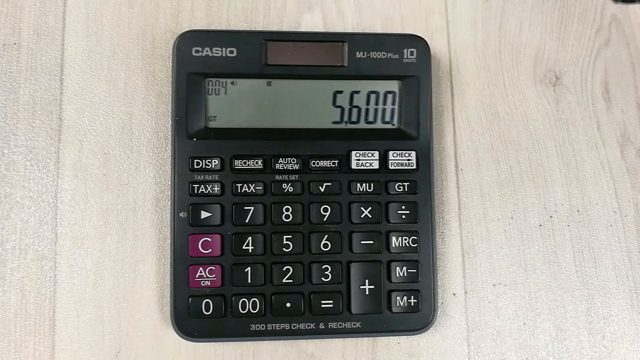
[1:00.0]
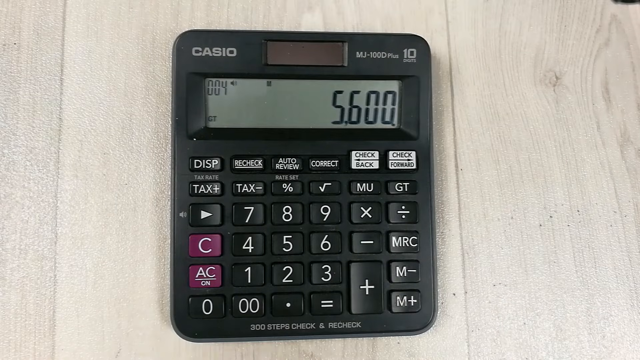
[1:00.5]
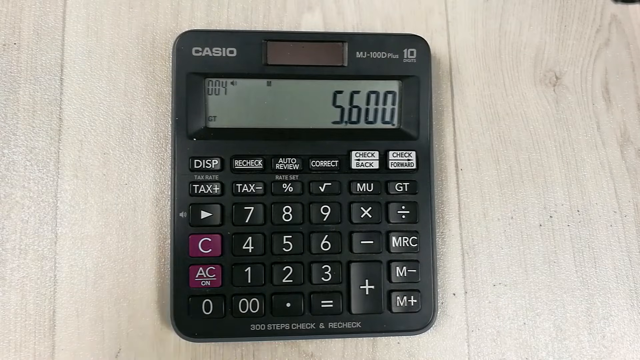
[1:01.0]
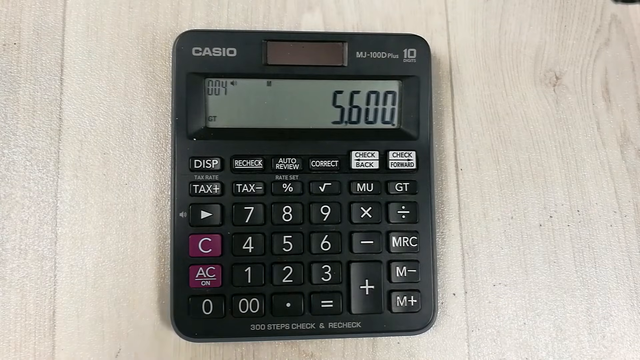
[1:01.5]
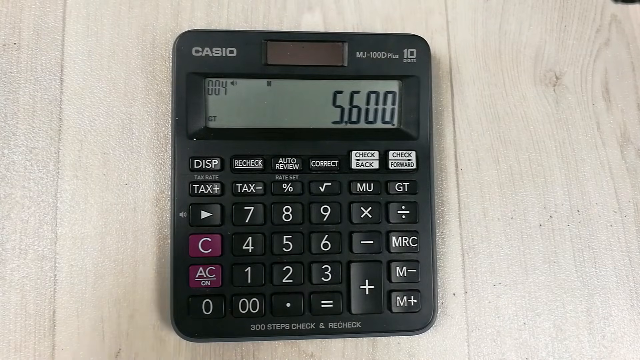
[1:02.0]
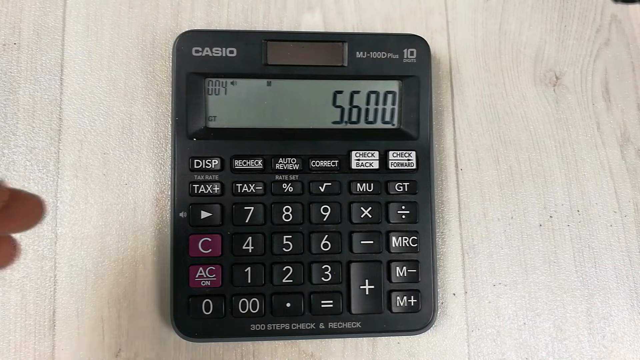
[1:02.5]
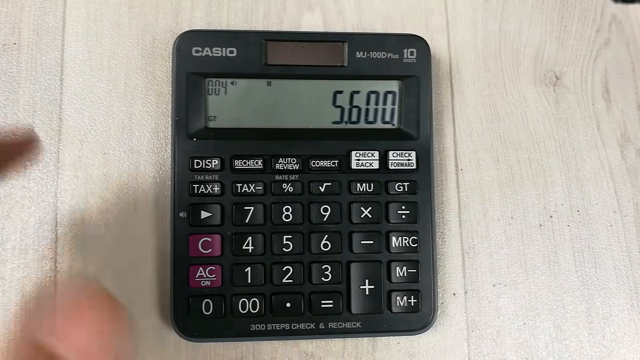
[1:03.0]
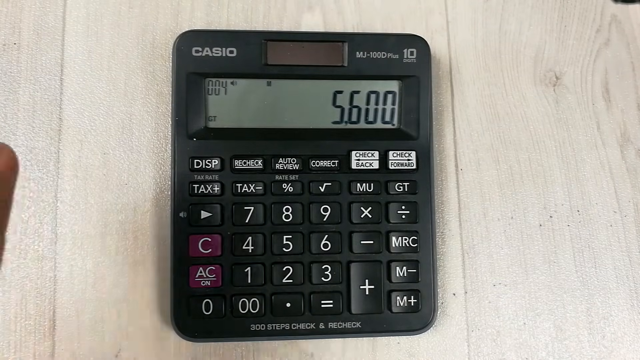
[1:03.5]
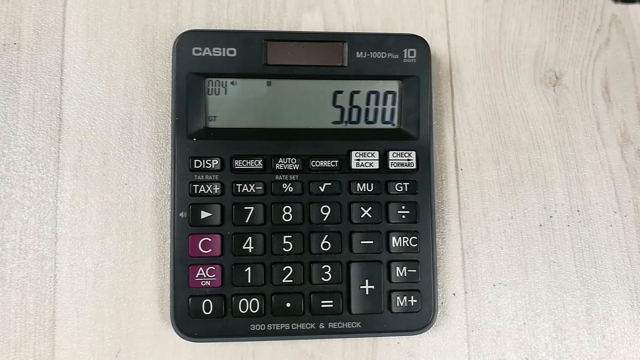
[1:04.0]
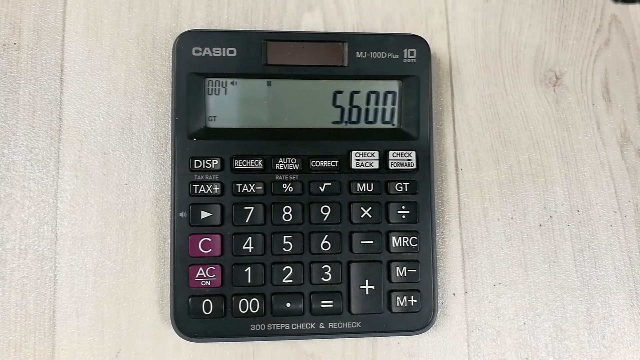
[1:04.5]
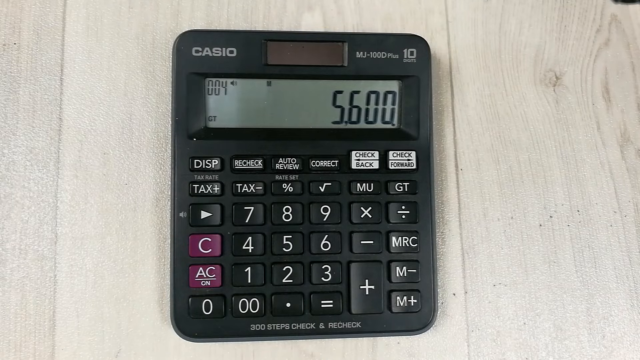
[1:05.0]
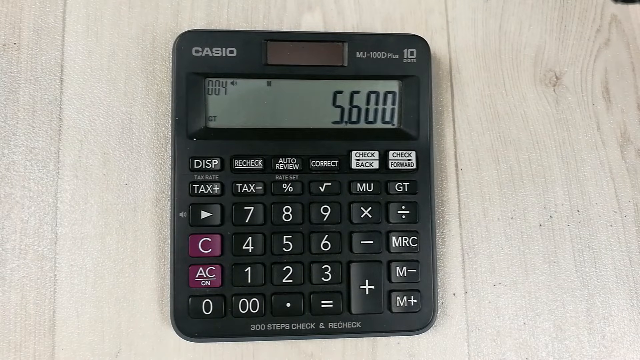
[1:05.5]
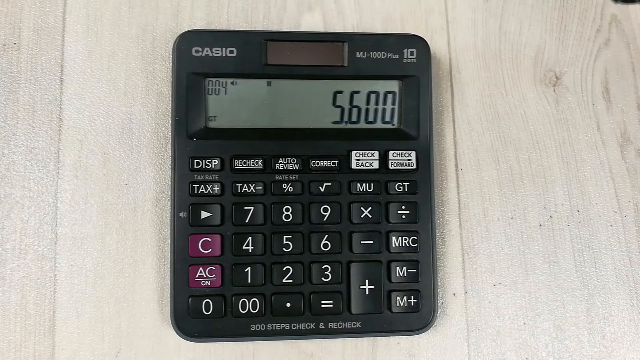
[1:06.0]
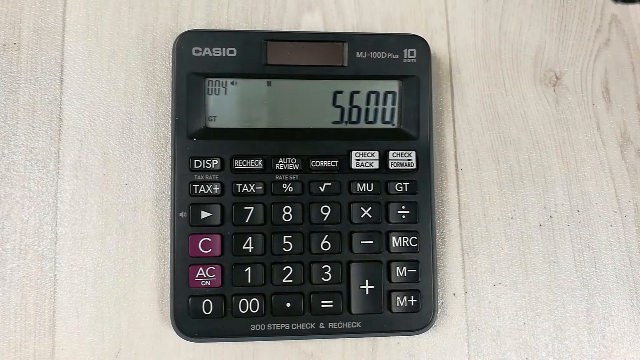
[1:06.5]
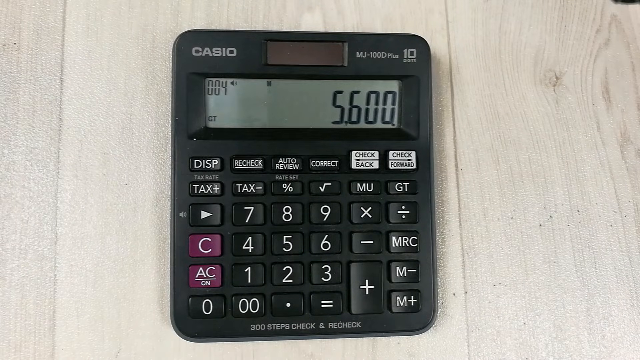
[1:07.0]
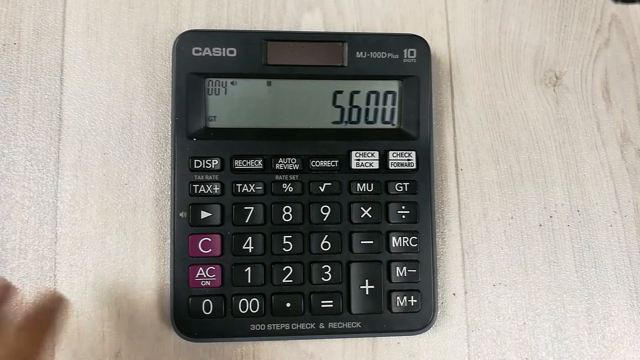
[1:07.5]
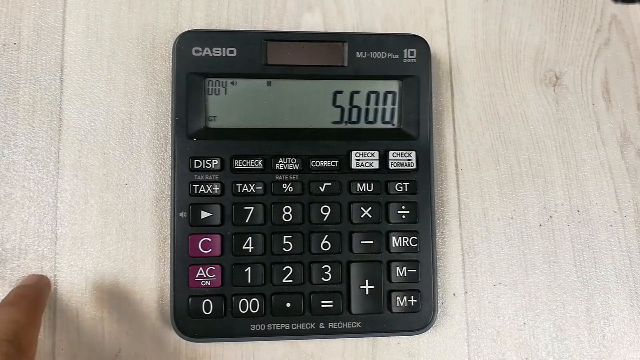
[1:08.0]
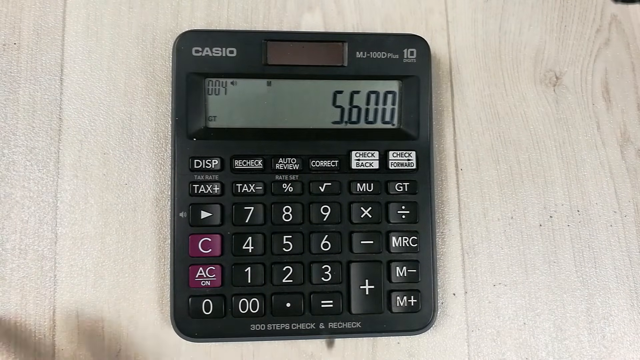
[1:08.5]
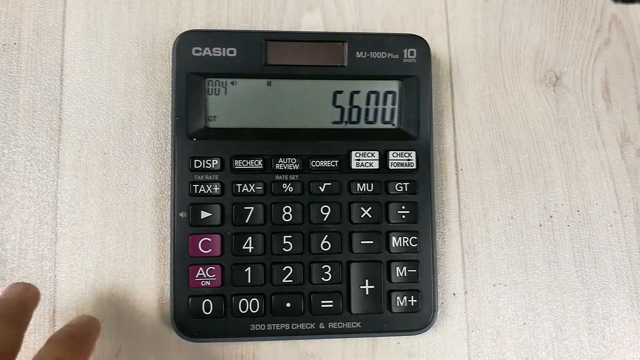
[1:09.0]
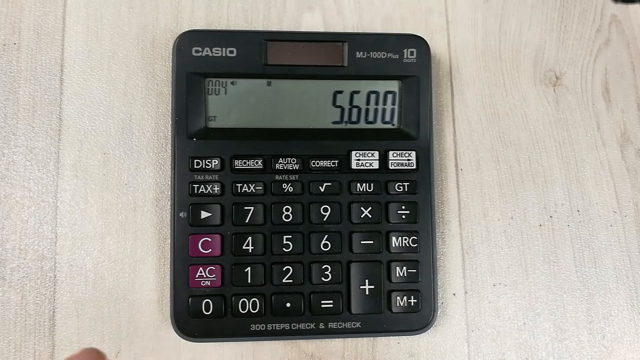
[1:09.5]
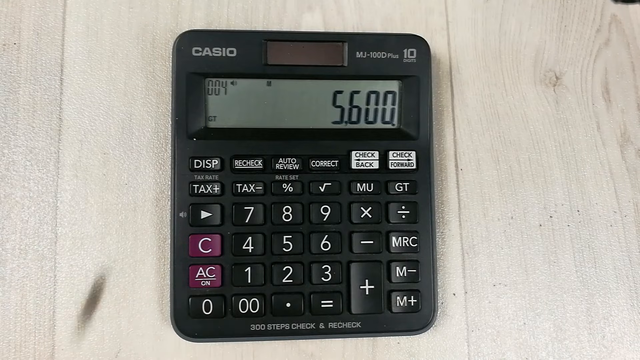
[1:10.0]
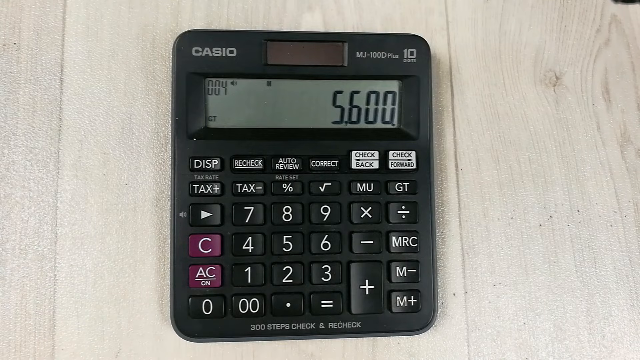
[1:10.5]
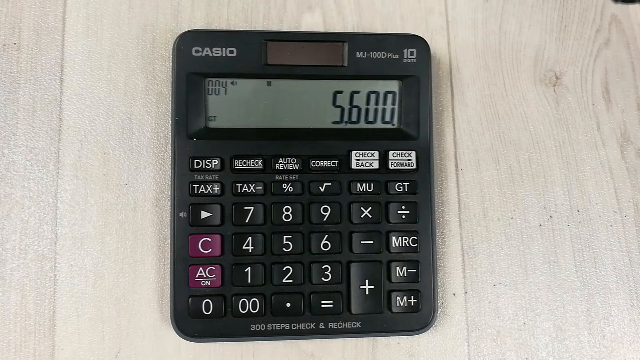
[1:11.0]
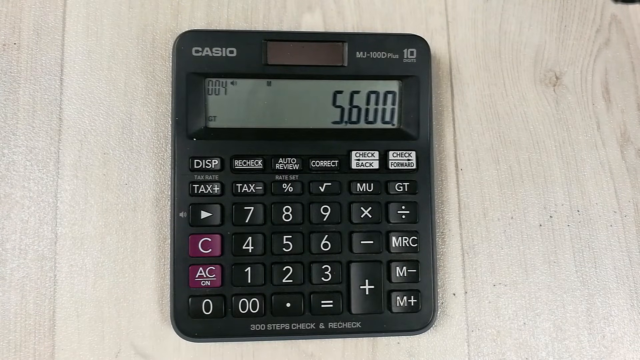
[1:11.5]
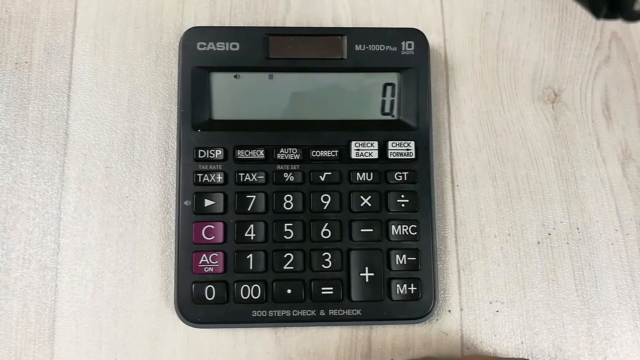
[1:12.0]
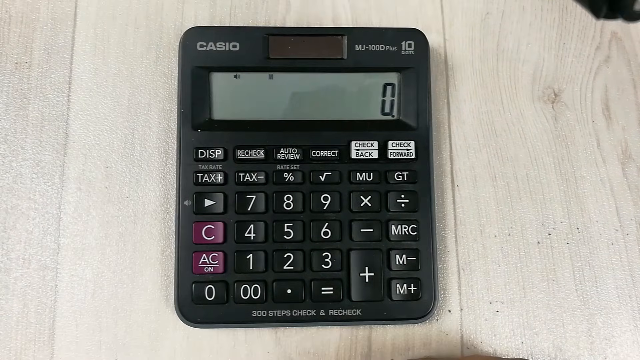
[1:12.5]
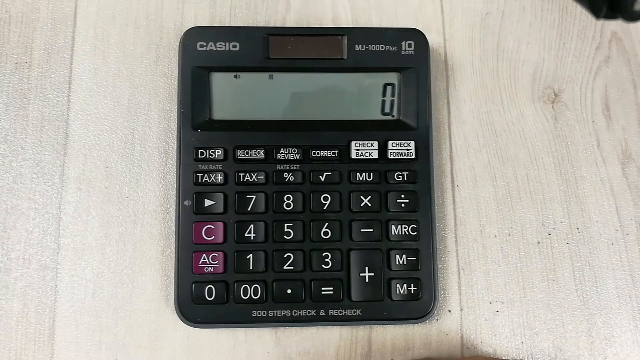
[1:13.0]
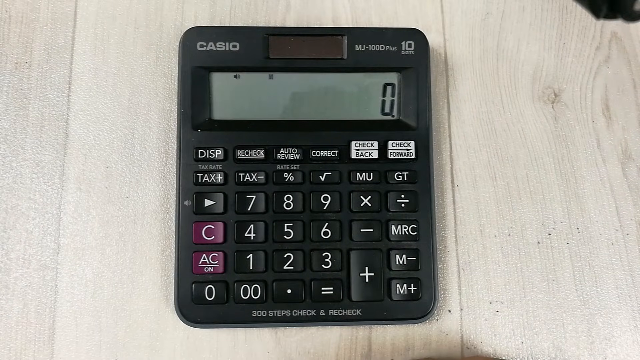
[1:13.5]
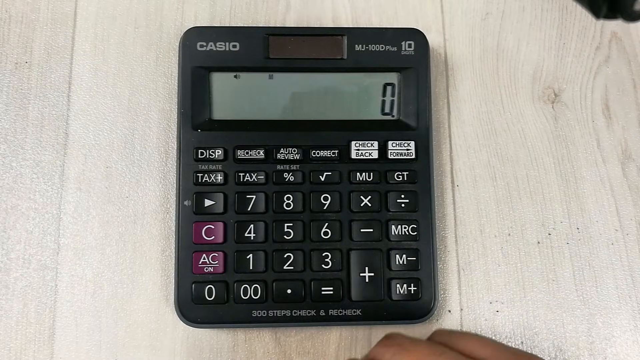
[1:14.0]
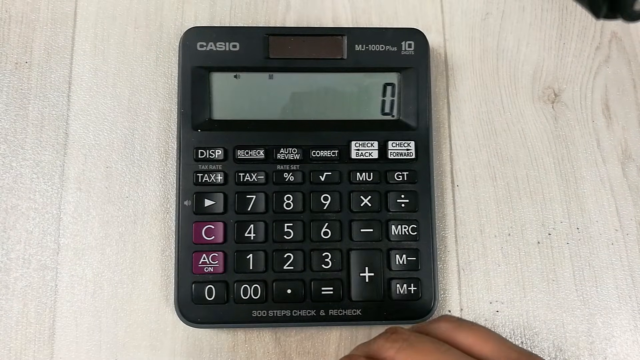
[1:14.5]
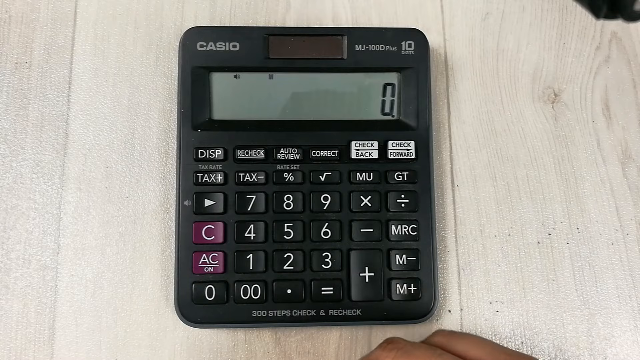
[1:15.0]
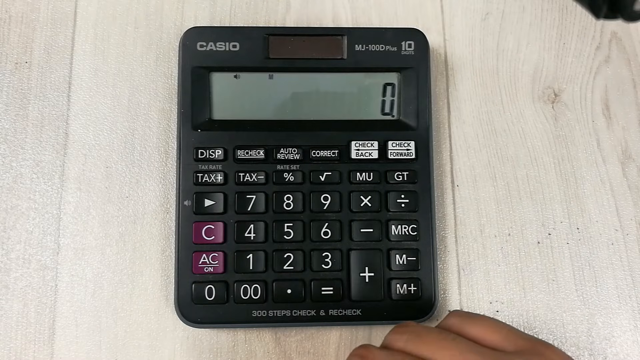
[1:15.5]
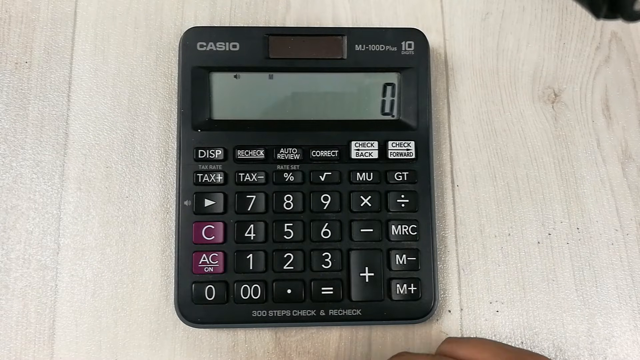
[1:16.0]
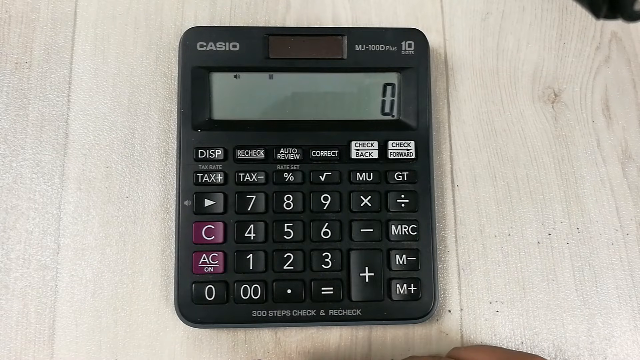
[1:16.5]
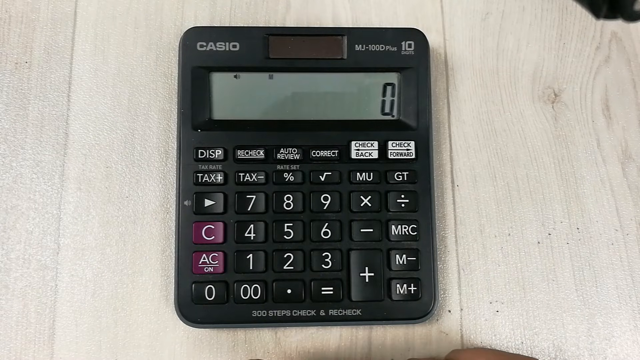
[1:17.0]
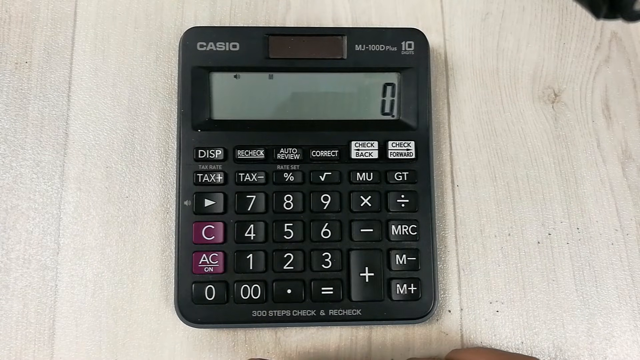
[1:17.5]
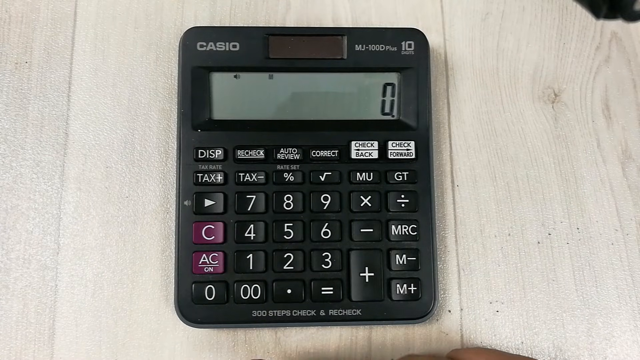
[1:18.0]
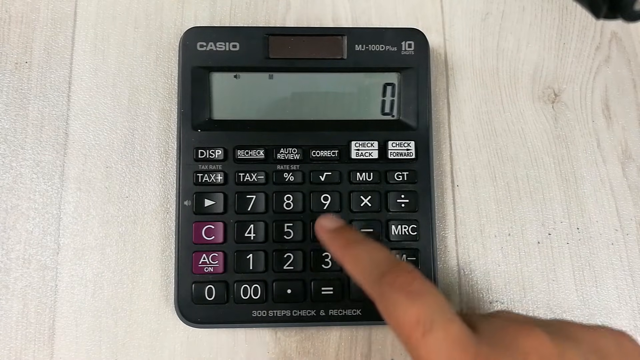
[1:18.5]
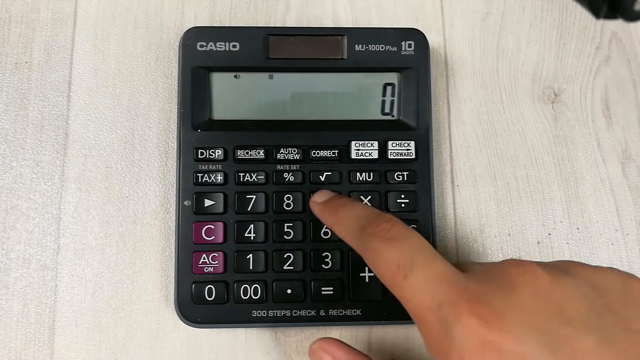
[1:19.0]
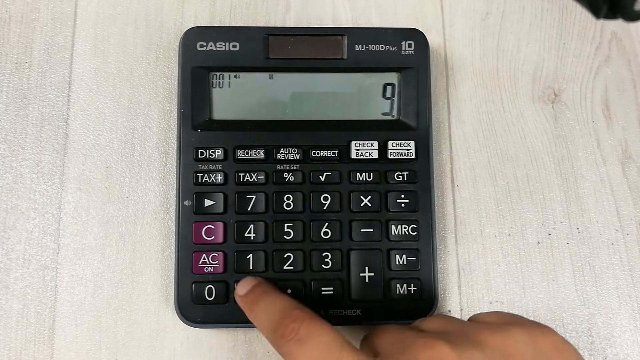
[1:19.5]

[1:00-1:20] The black Casio calculator rests on a wooden table with 5600 on its display. The person gestures toward the calculator with their left hand; their right hand is not yet visible. A fly buzzes around the shot, over the camera, darting out of the frame and back in. Then there is a cut. The perspective stays the same, looking top down at the calculator, but the display now shows zero instead of 5600. The person's right hand points slightly at the calculator, and they type in 9000 by touching 9 first, then the 00 button, then the single 0 button.